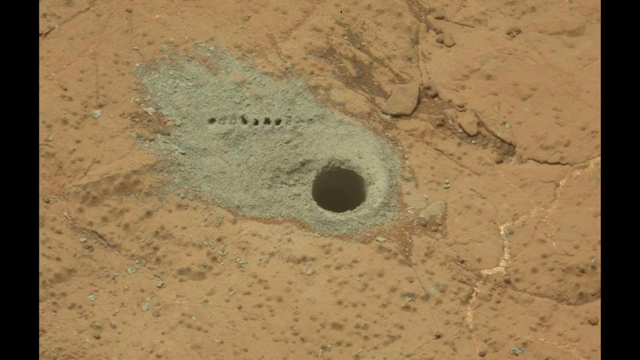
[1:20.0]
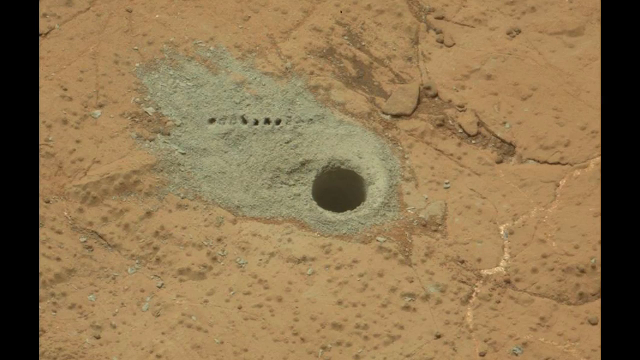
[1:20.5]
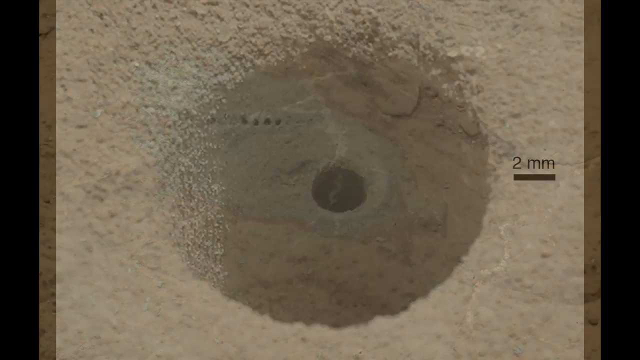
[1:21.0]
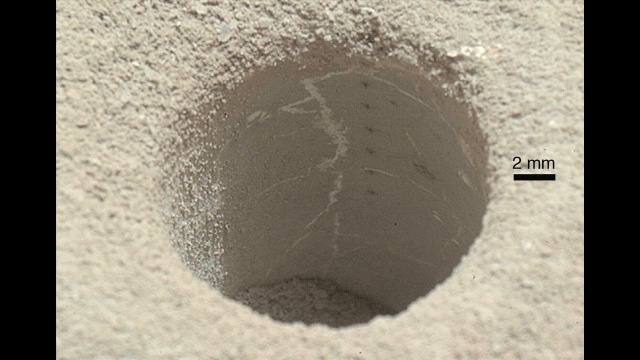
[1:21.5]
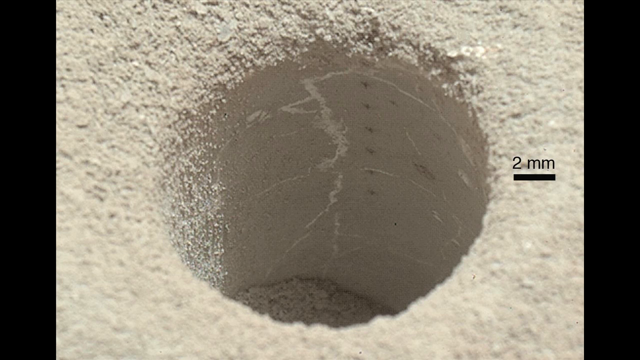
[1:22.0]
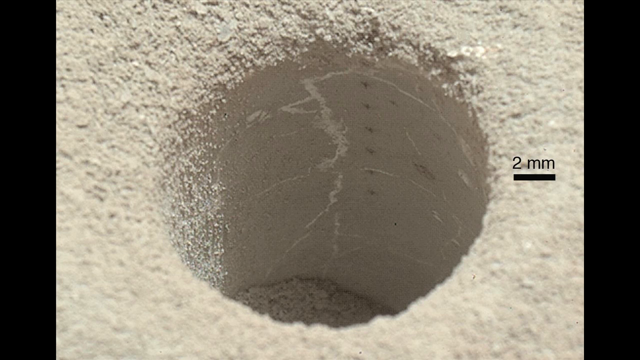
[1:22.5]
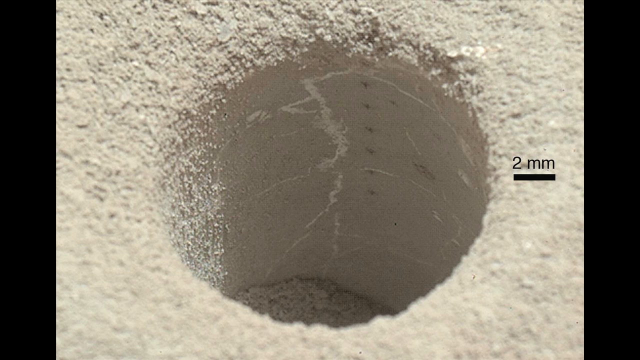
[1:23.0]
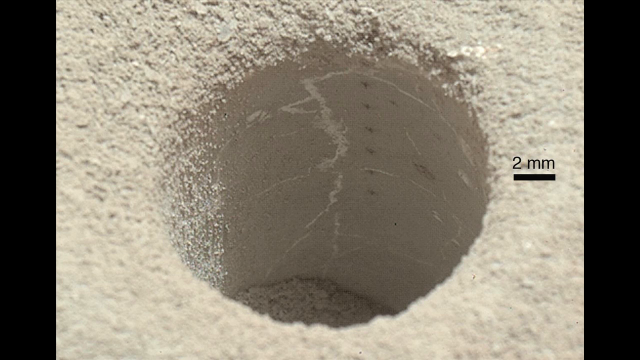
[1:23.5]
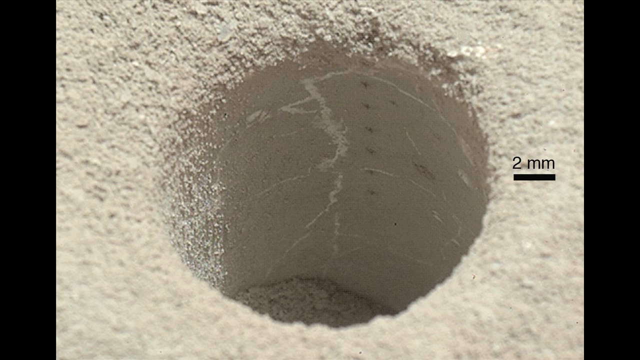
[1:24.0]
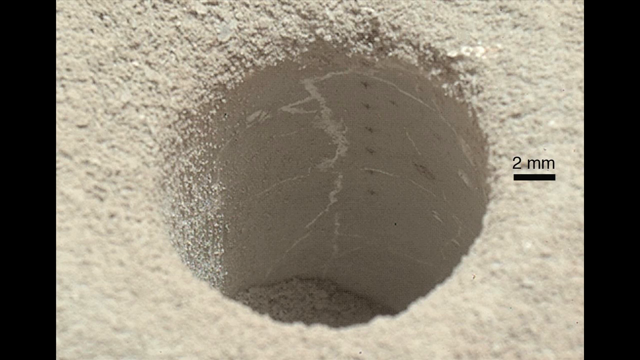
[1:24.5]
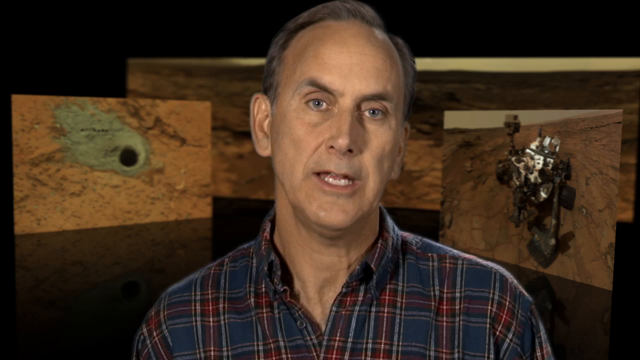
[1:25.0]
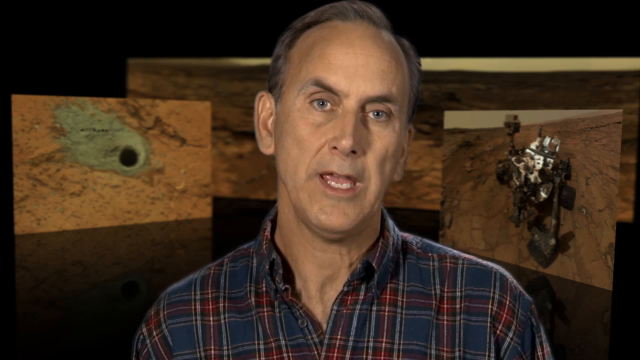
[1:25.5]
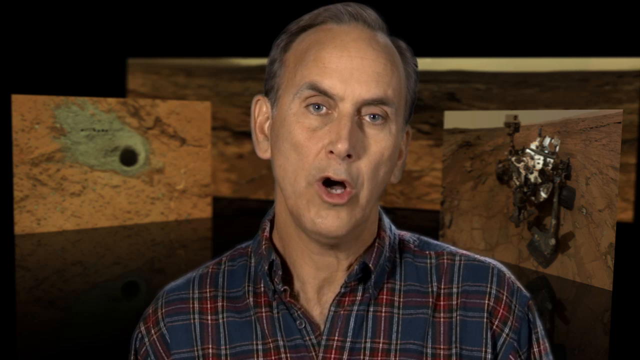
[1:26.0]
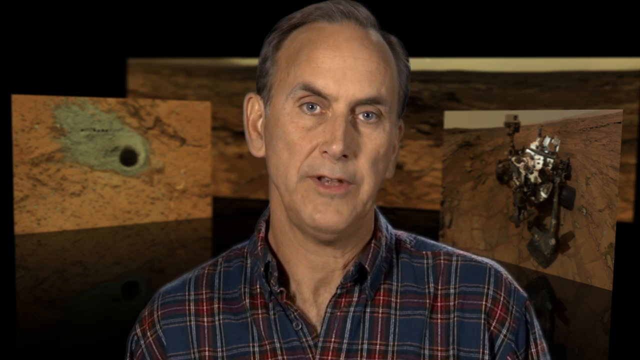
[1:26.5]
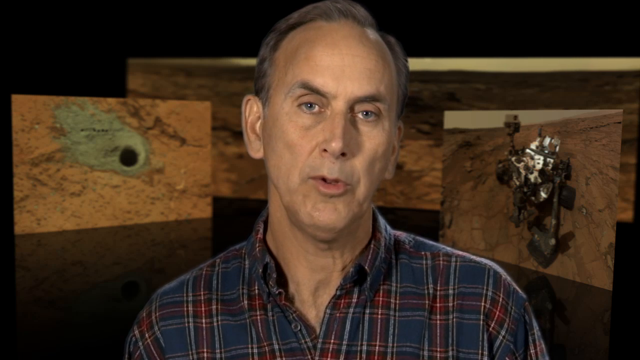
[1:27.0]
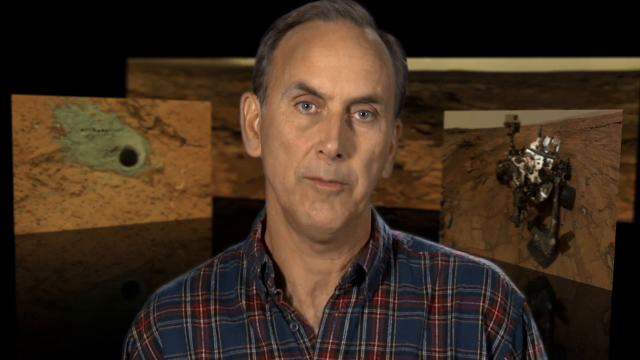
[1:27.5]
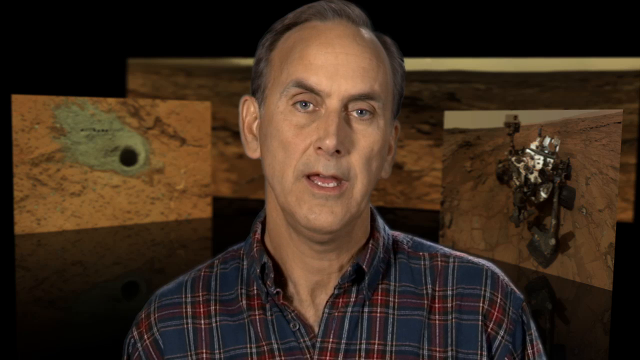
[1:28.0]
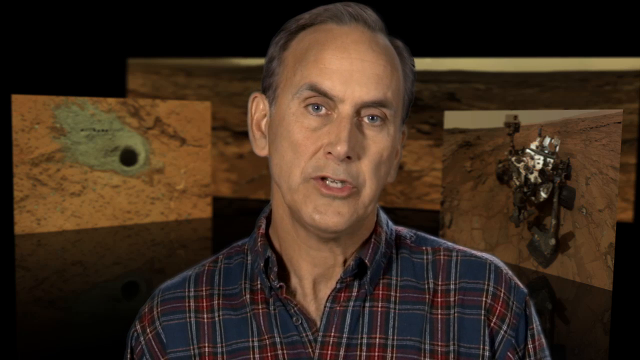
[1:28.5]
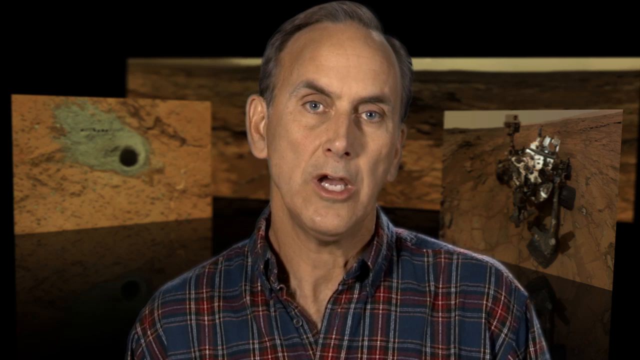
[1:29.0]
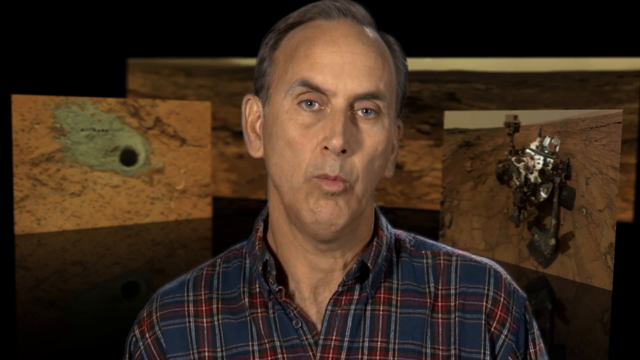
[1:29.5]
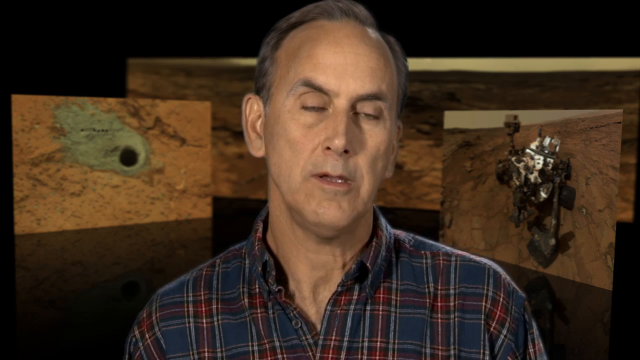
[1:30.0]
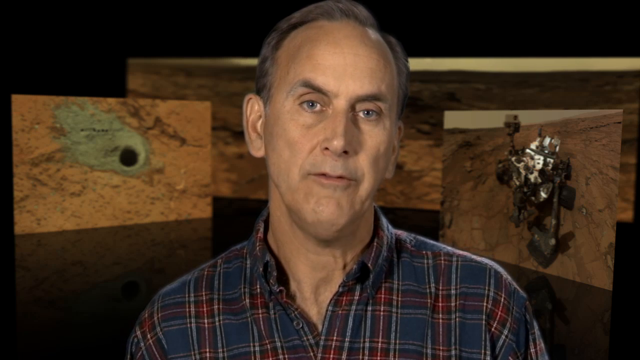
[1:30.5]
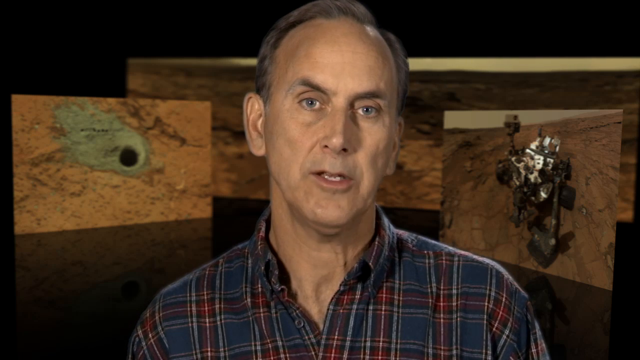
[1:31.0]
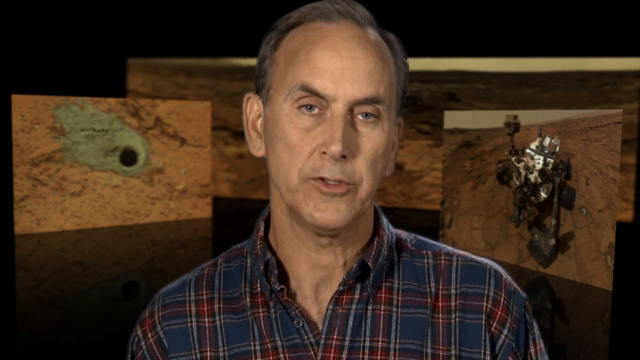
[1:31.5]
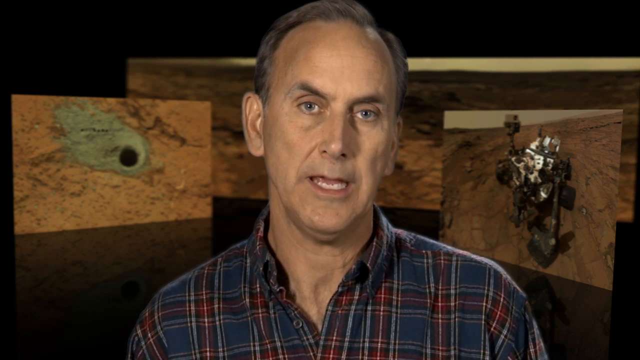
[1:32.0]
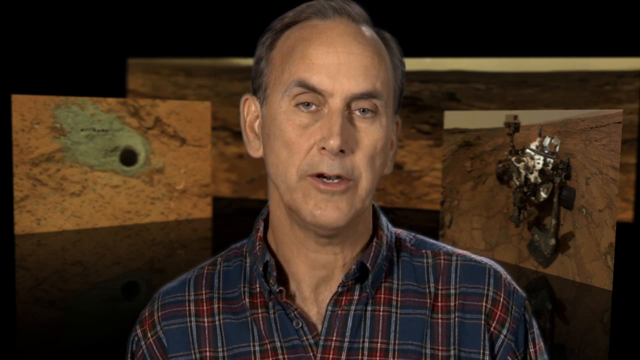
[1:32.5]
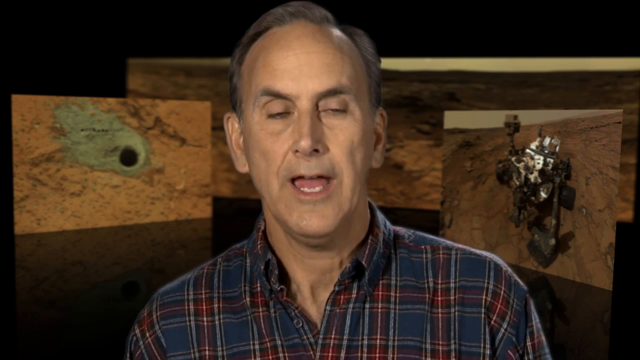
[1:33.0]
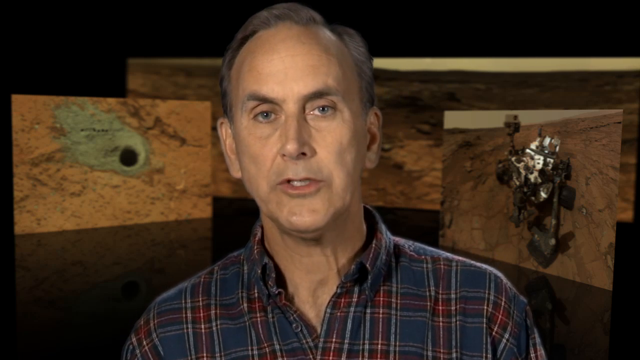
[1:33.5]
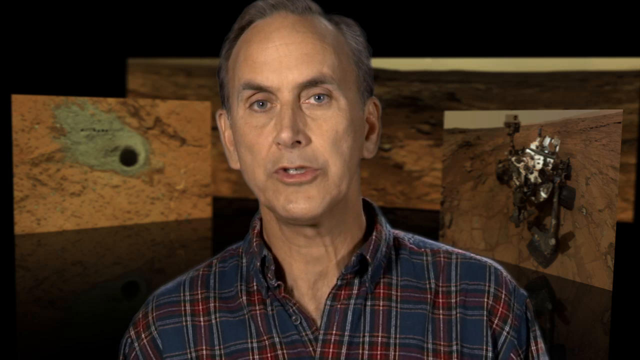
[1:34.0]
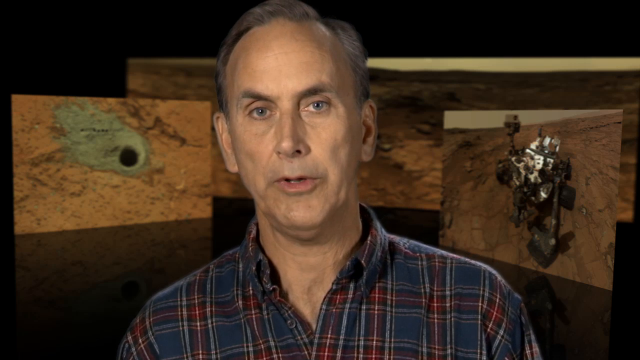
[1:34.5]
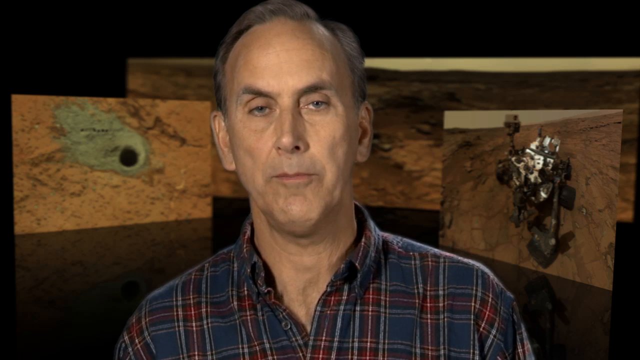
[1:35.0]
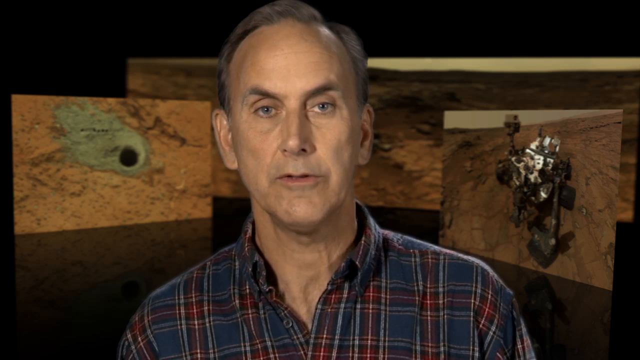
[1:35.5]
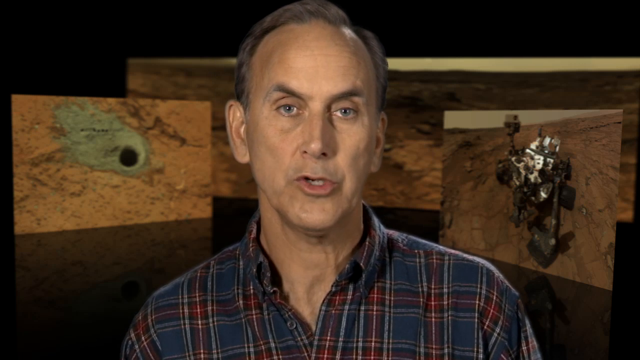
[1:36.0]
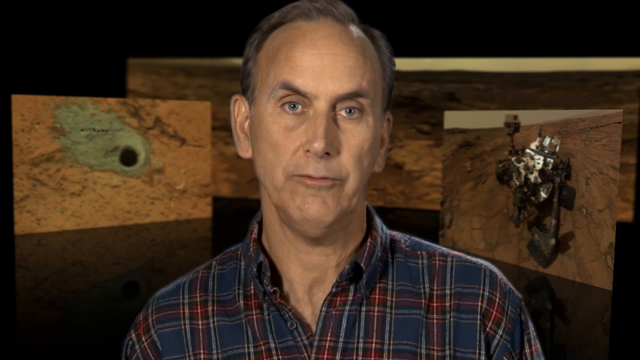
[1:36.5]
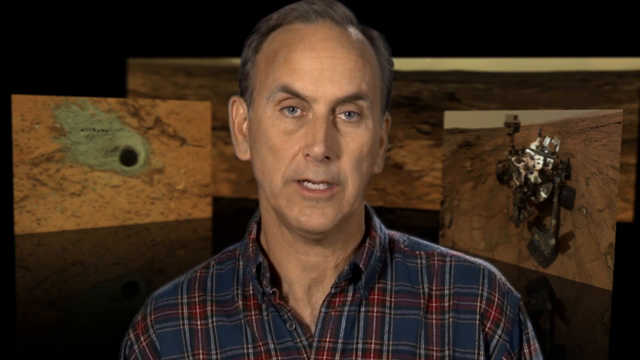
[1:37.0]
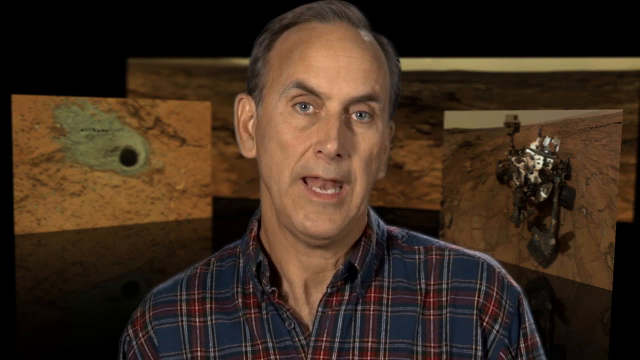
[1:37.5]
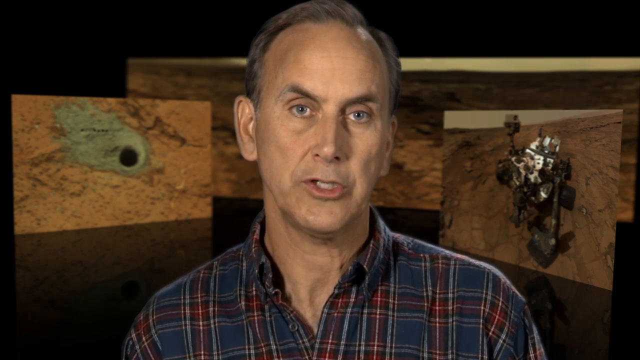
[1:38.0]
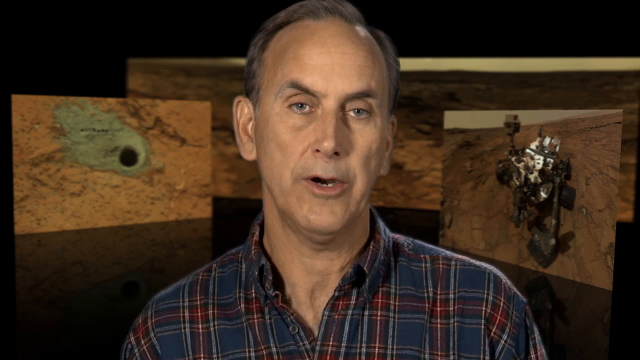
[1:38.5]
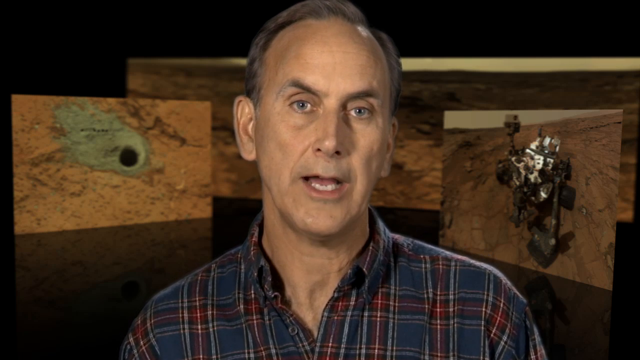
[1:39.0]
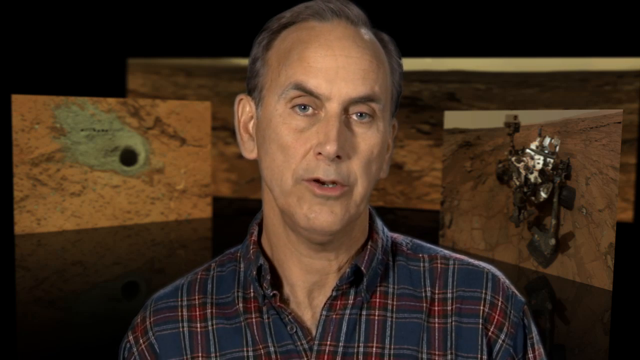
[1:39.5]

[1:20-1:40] The scientist continues talking with three pictures in the background. One shows a hole in the center of a part of Mars that is green in color. A picture behind his head may be a picture of Mars itself; part of it is hidden by his head. The last picture shows the gigantic piece of equipment, which may be the SAM analysis instrument. He appears to be explaining the findings and showing pictures of them.